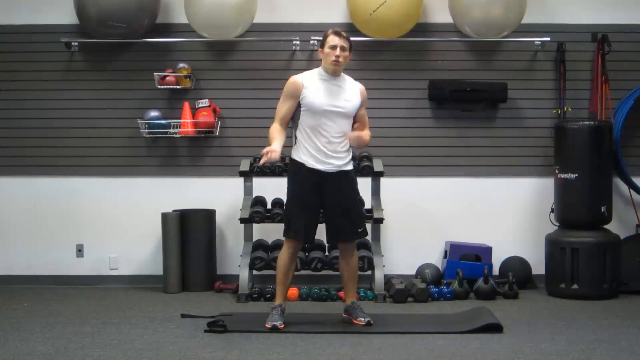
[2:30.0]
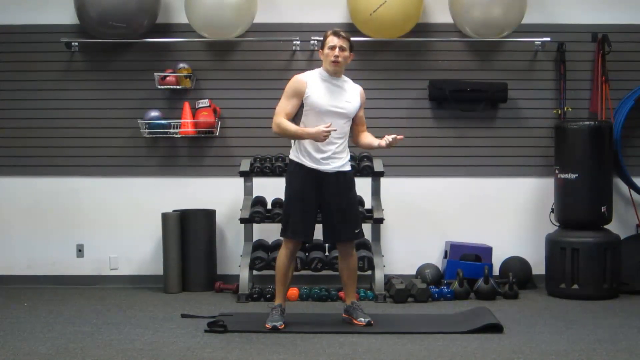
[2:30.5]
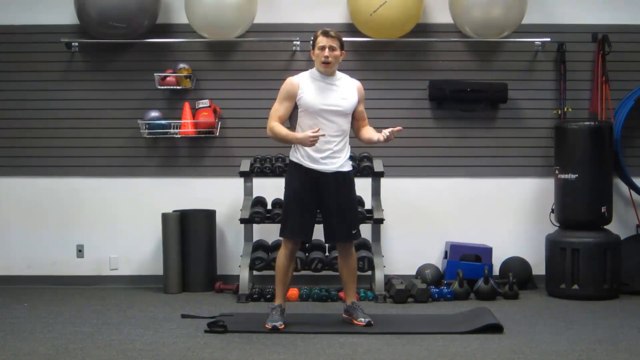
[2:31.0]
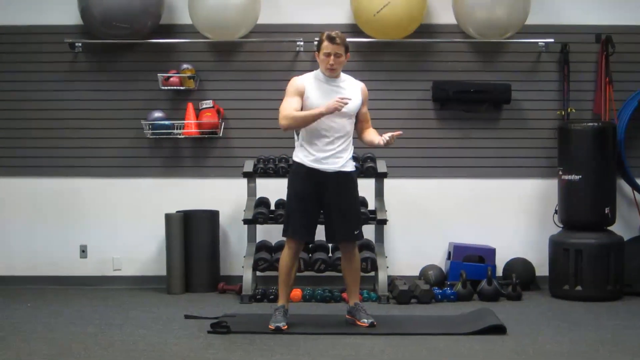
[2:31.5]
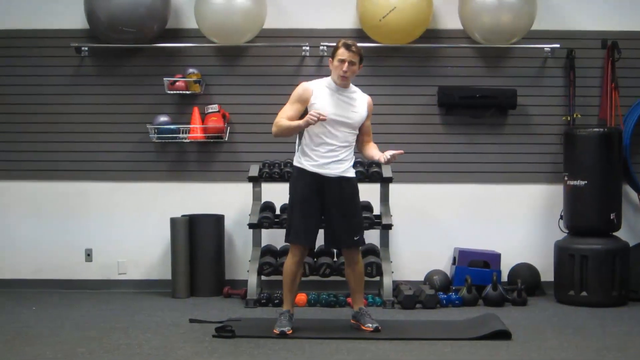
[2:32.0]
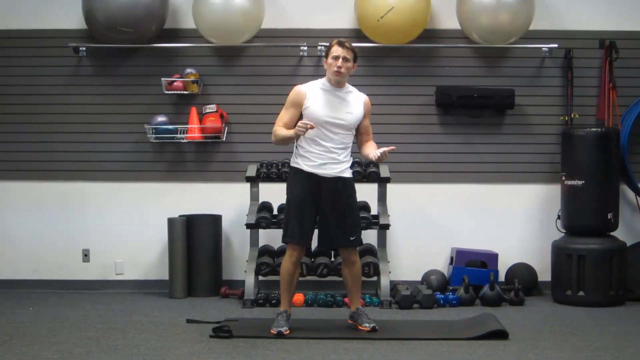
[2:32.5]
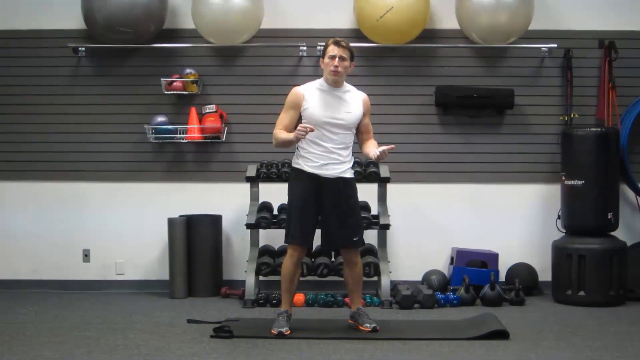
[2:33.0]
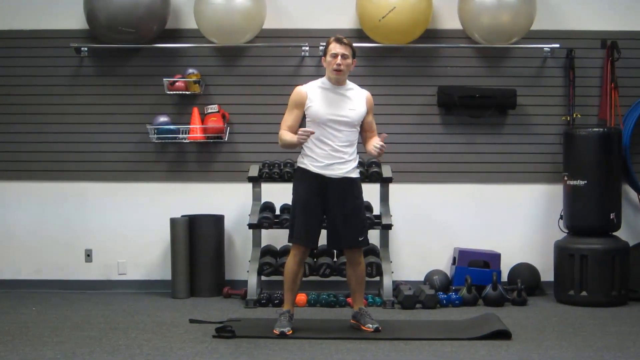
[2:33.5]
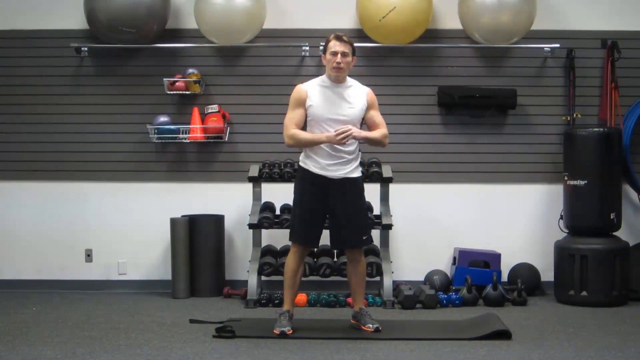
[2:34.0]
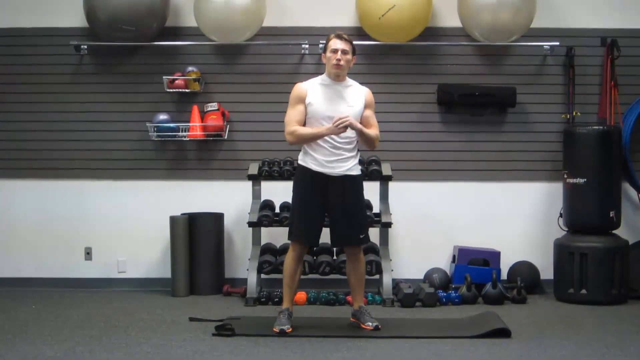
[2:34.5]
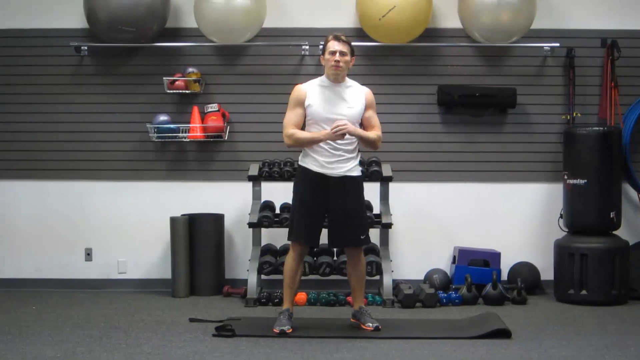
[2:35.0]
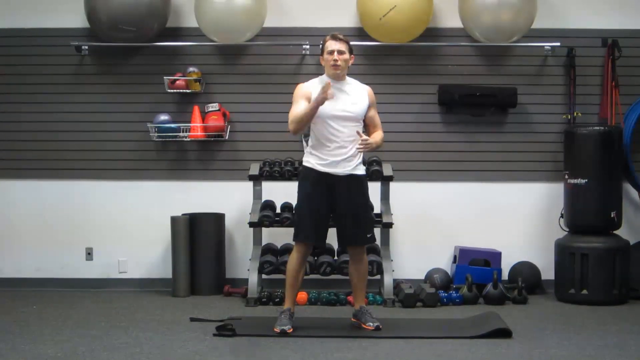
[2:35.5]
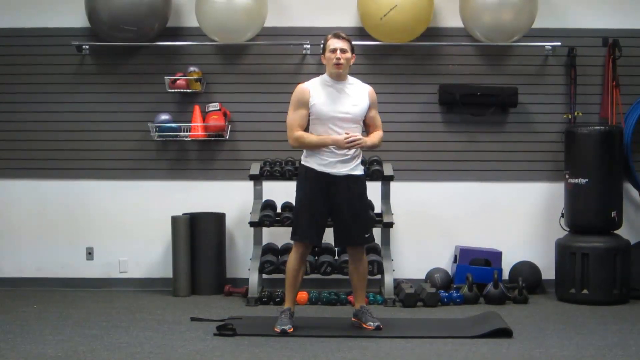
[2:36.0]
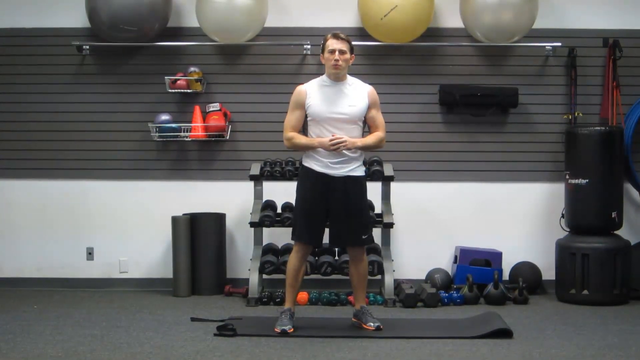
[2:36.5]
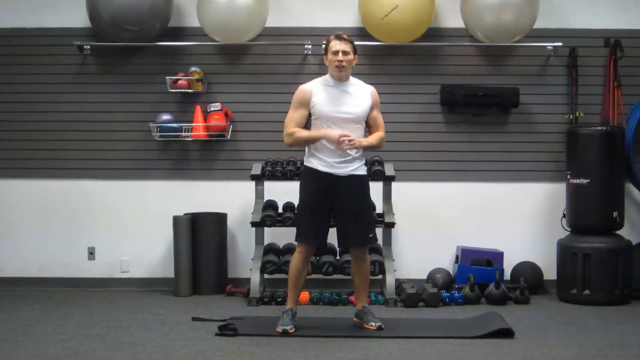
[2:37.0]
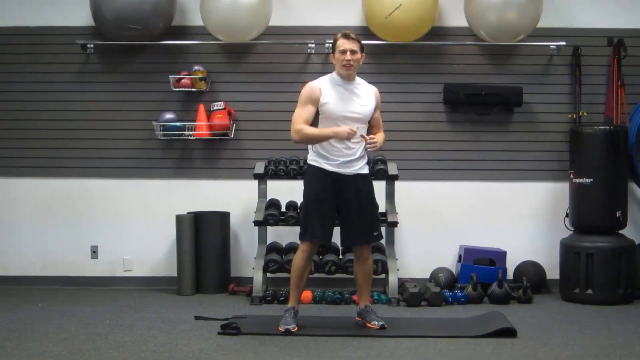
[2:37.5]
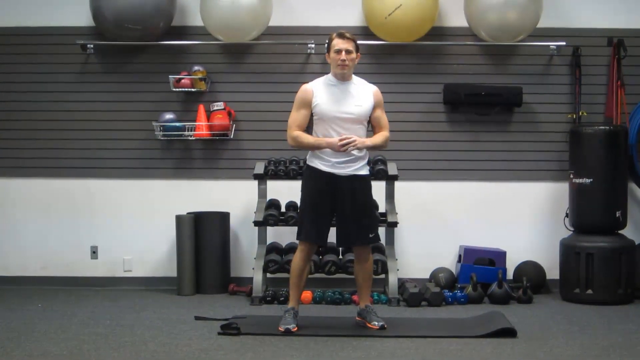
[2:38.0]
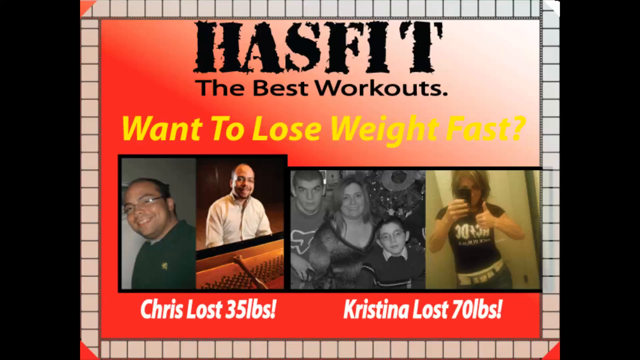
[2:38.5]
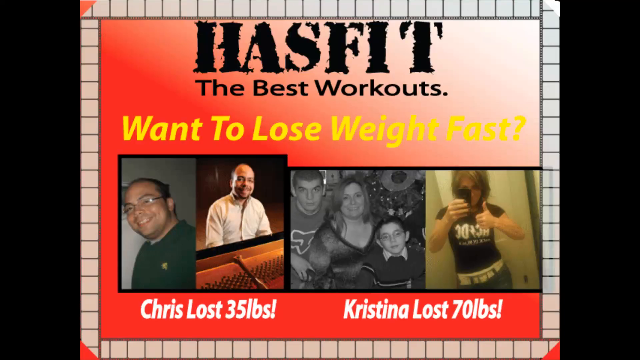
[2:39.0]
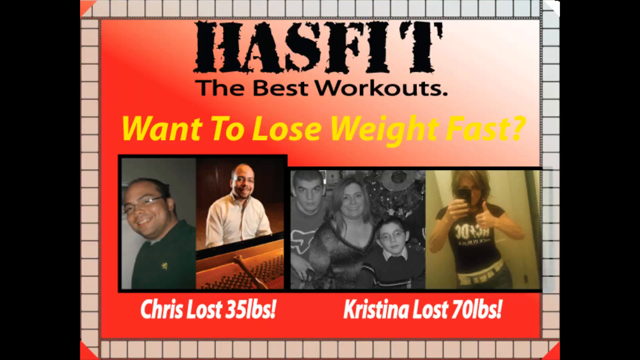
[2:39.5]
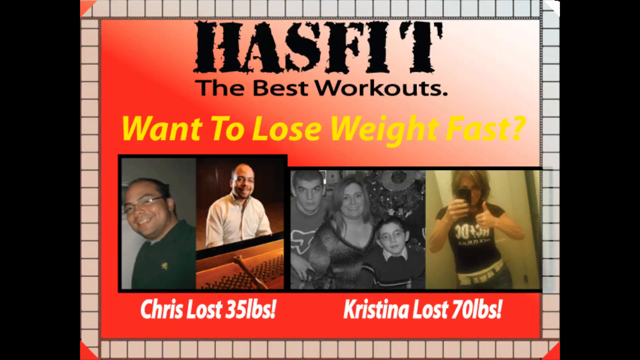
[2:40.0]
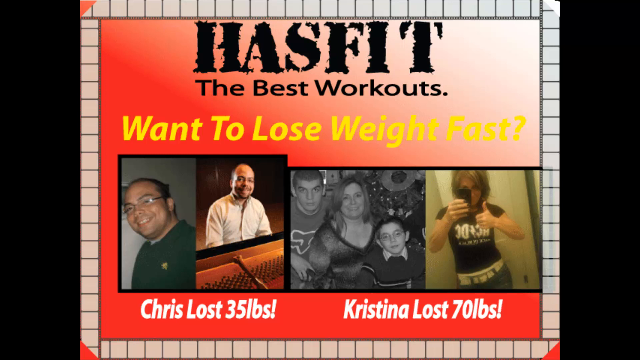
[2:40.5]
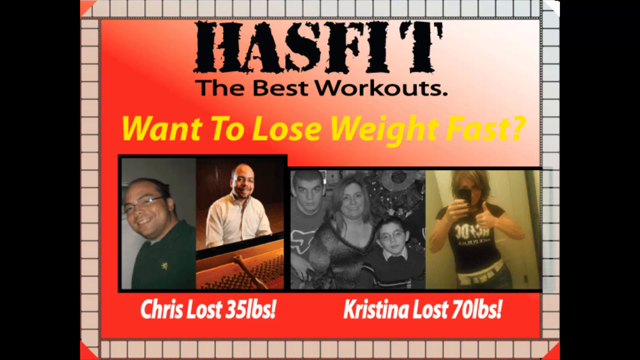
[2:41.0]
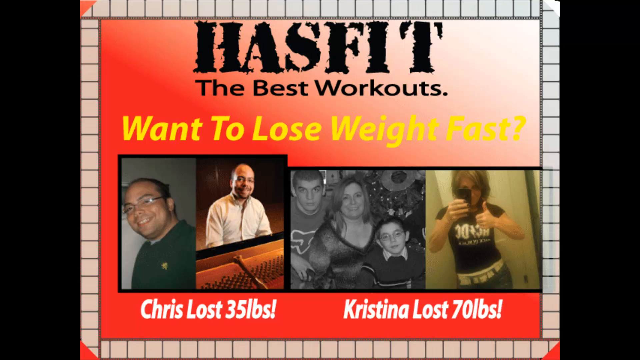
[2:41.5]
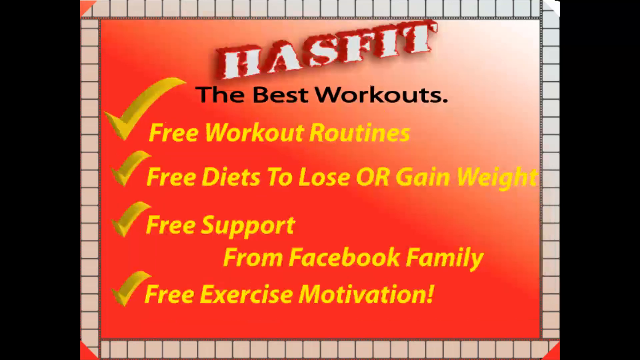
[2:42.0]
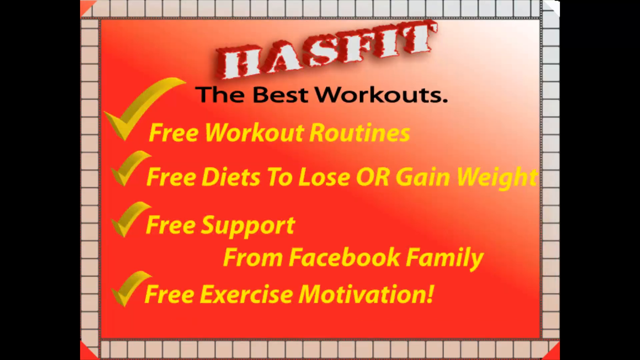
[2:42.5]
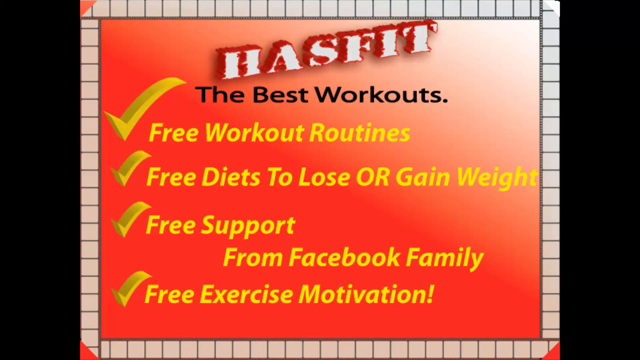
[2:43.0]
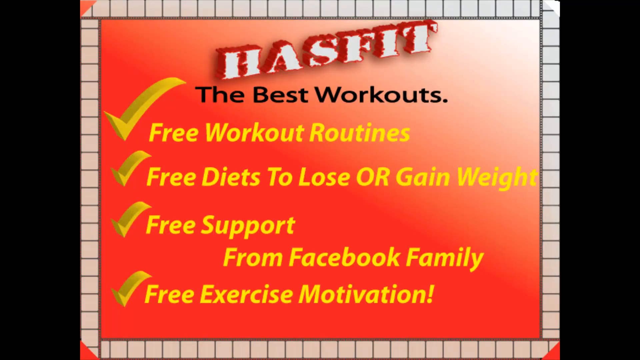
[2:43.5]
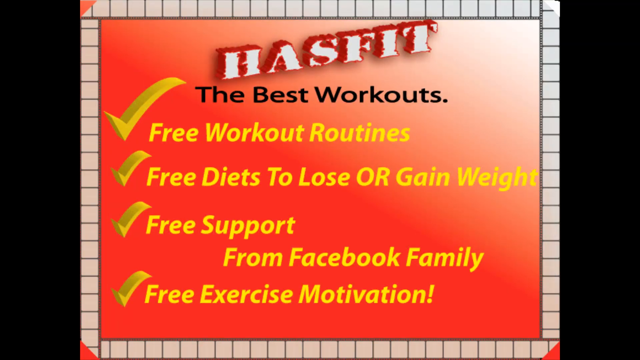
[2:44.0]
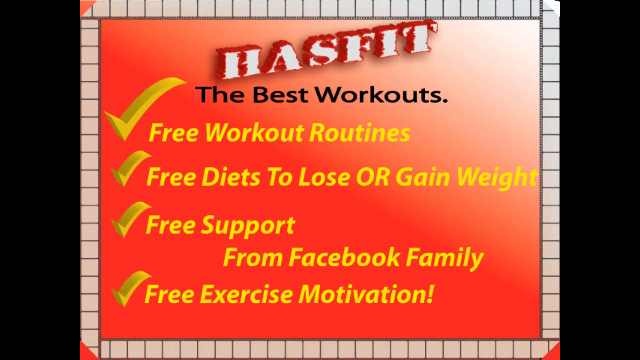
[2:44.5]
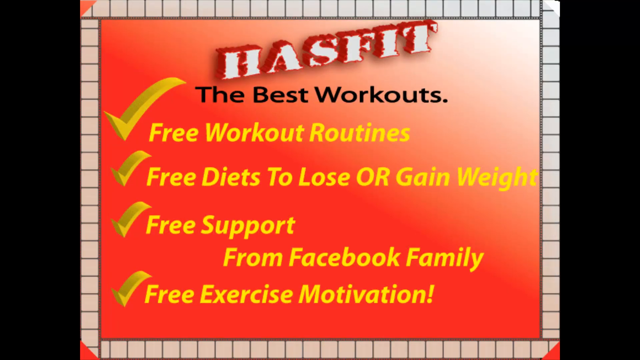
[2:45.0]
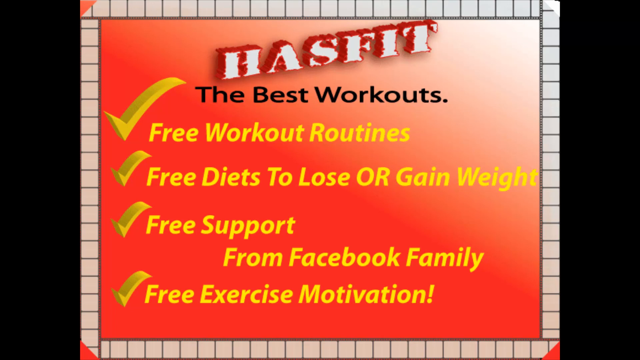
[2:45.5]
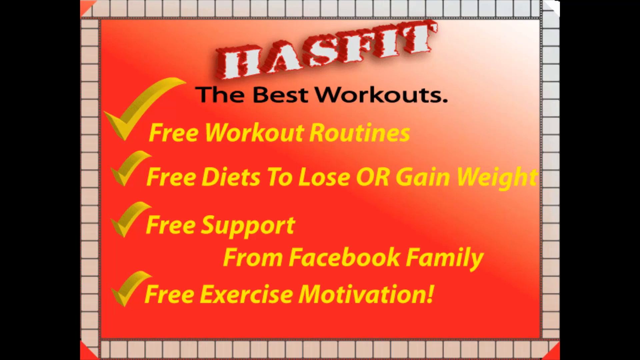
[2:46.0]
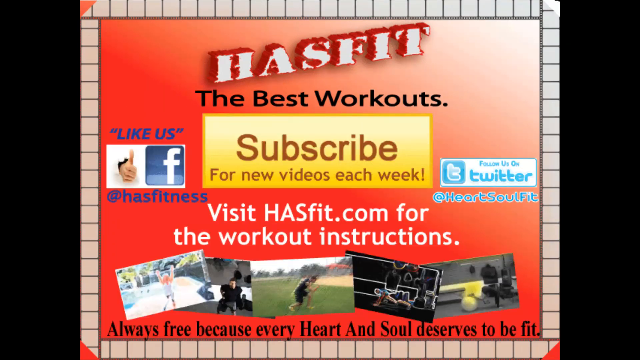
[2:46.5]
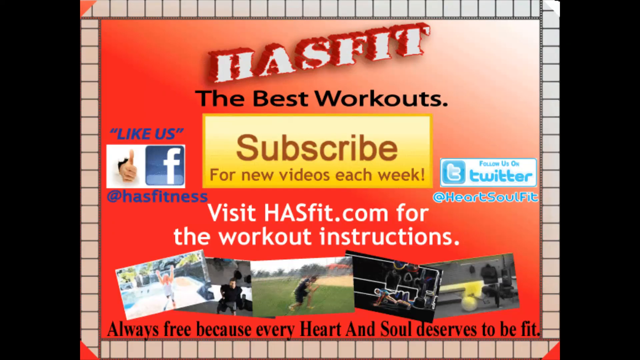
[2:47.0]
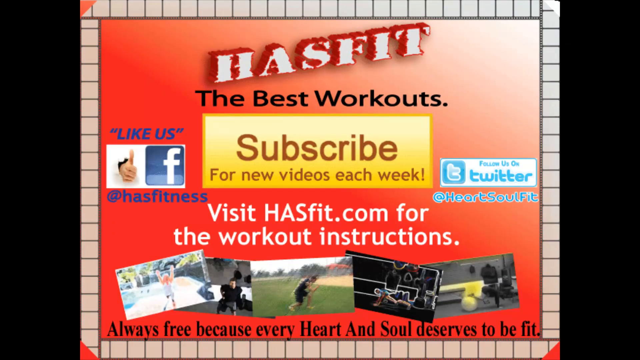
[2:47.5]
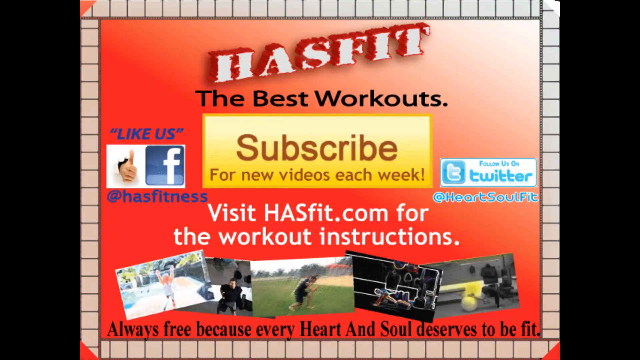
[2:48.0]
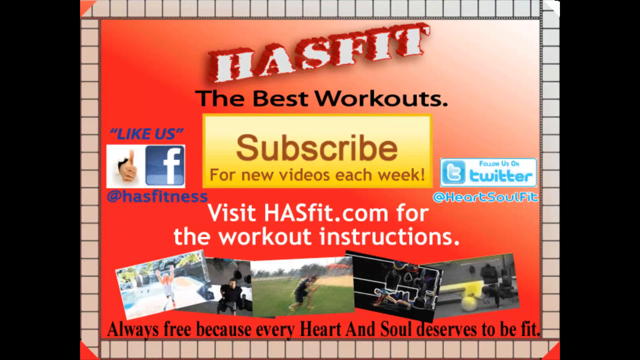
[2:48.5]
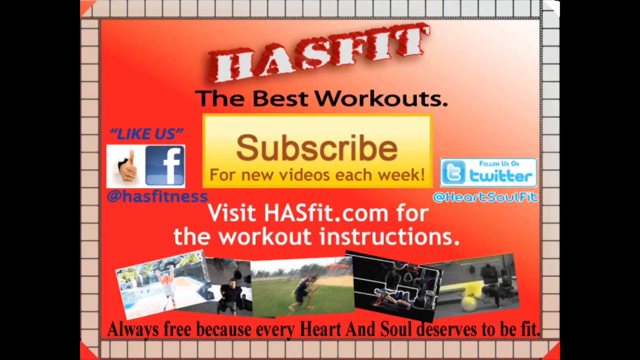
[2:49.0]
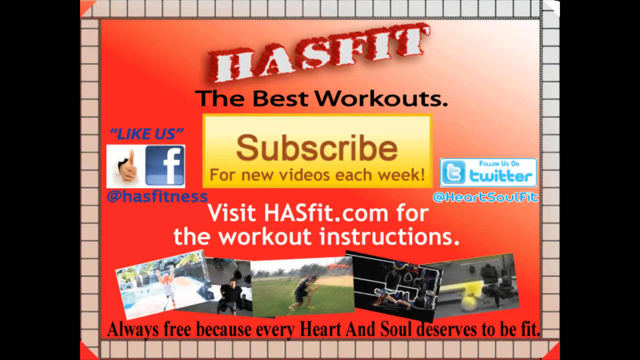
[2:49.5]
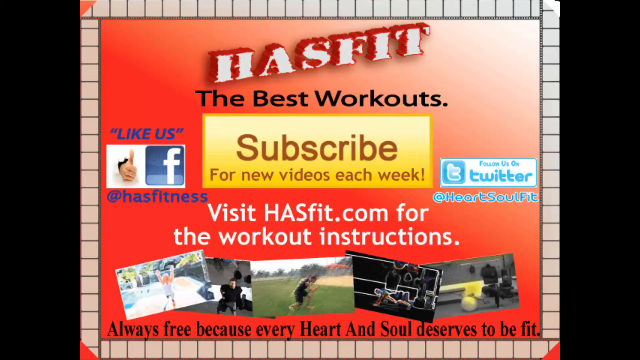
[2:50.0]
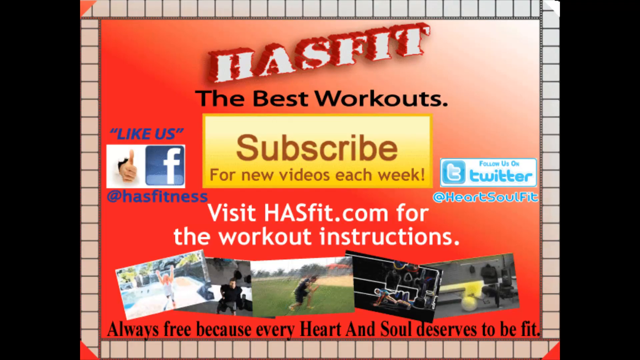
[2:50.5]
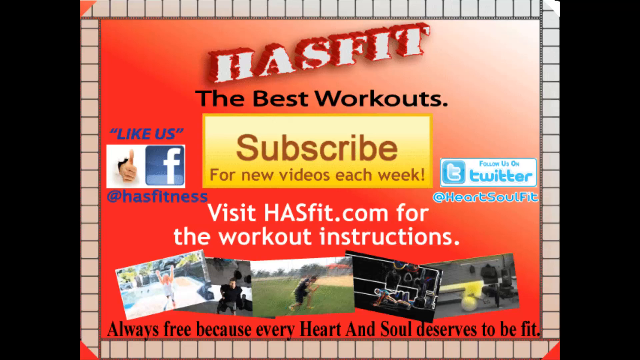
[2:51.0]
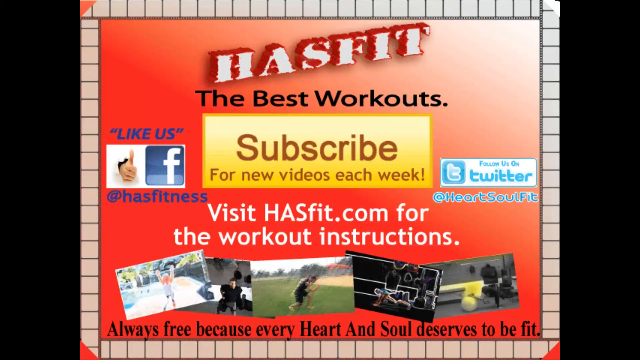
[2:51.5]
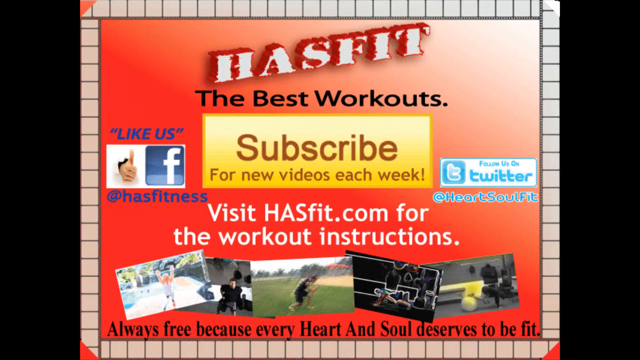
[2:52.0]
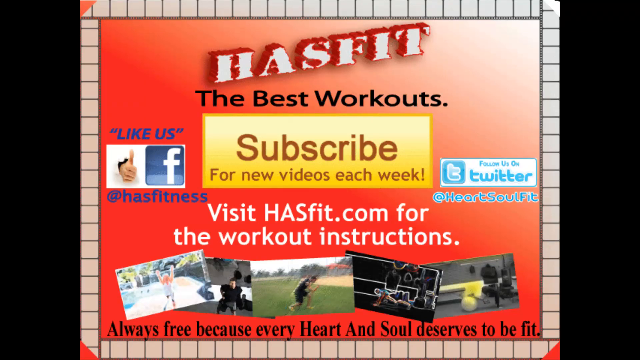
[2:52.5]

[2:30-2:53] Standing up straight and talking, the man points his fingers to his left and right, waves his right arm in a circular motion and pinches two fingers together. He then makes a fist with his right hand and puts it into his left hand. He seems to be a personal trainer explaining his workout routine. The screen then shows a banner mentioning "the best workouts" and "want to lose weight fast" in yellow text, with four pictures at the bottom of people who have worked out on the program: a man on the left wearing glasses, another man playing the piano, and what seems to be a family, shown in before and after pictures. A woman takes pictures of herself with her left hand while giving a thumbs up; she is wearing what looks like an ACDC shirt and seems to be smiling. Then all the banners and ads for the workout campaign are shown again.